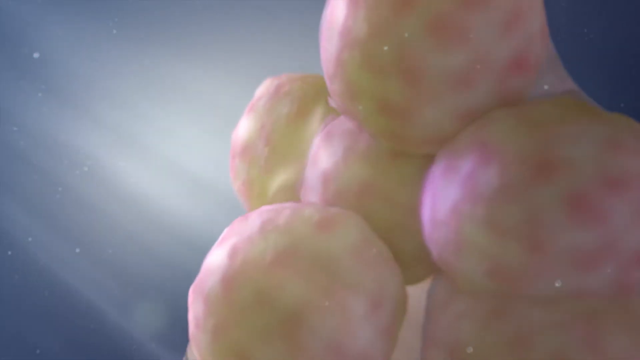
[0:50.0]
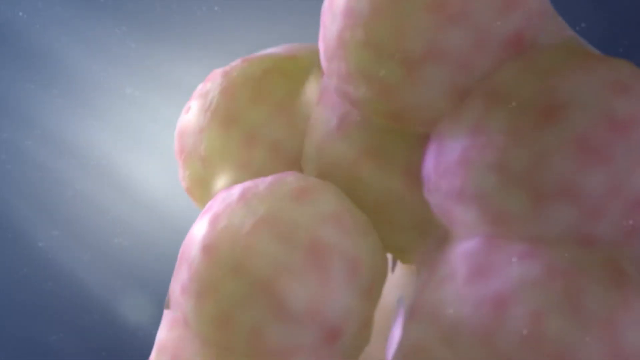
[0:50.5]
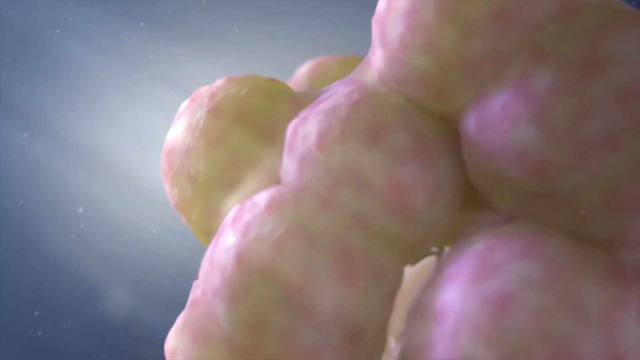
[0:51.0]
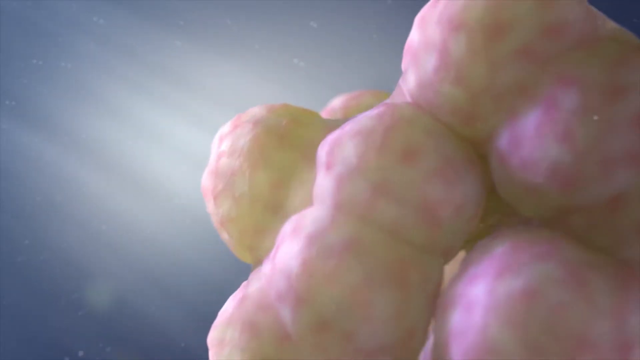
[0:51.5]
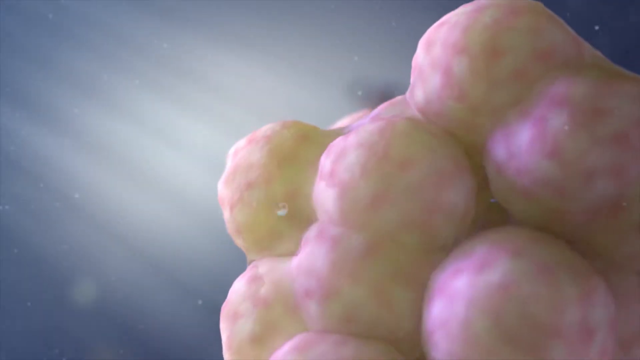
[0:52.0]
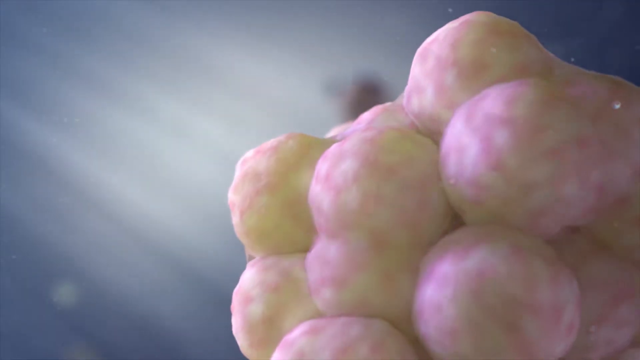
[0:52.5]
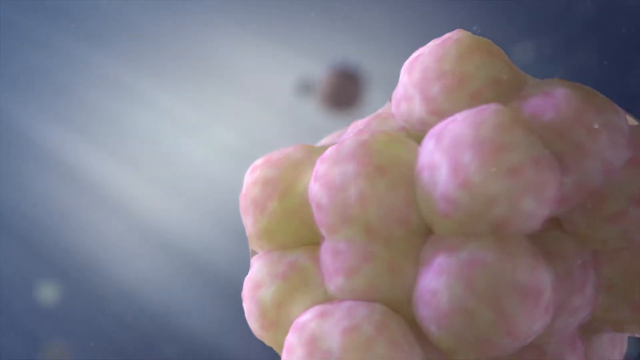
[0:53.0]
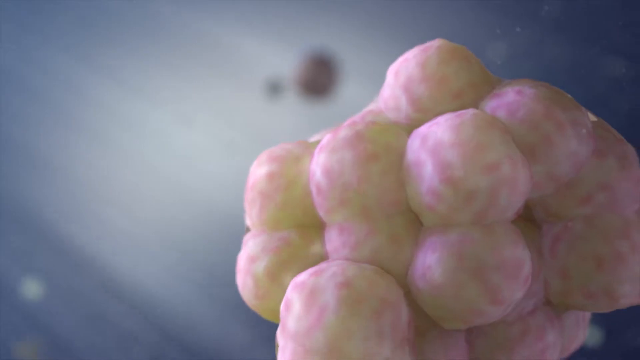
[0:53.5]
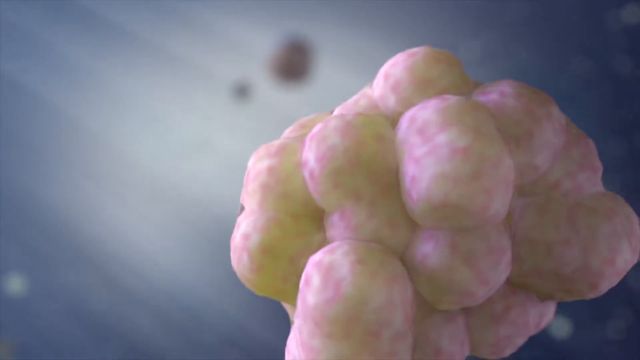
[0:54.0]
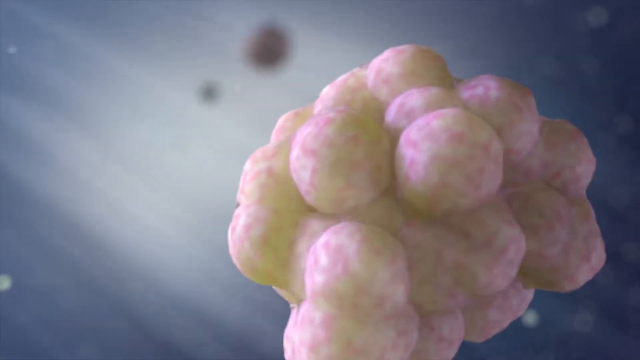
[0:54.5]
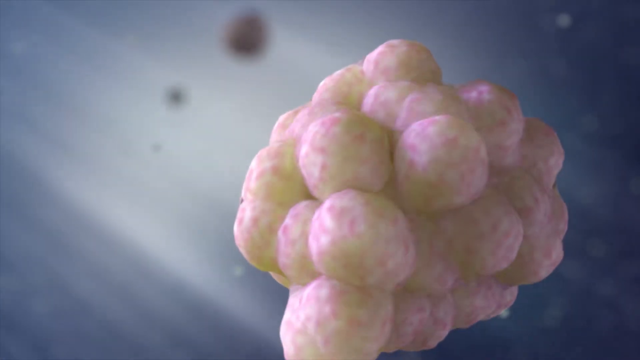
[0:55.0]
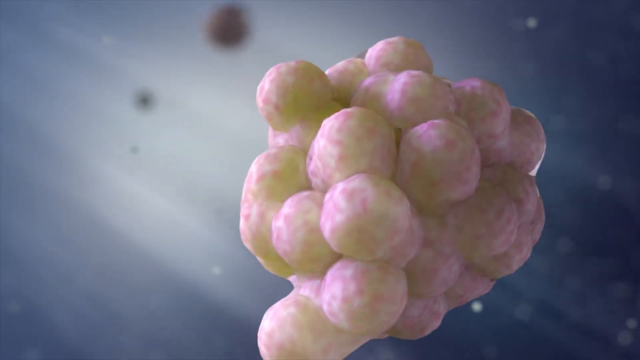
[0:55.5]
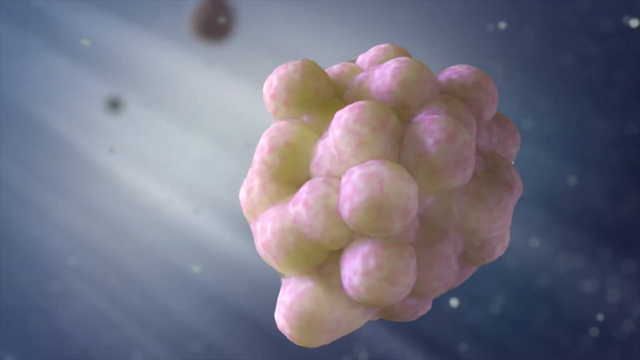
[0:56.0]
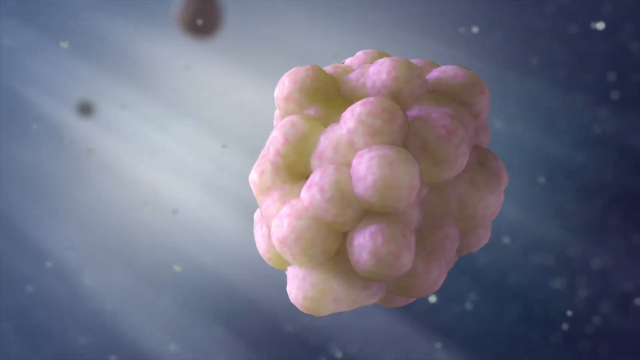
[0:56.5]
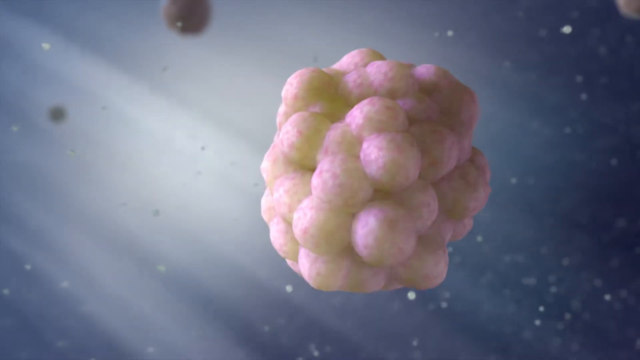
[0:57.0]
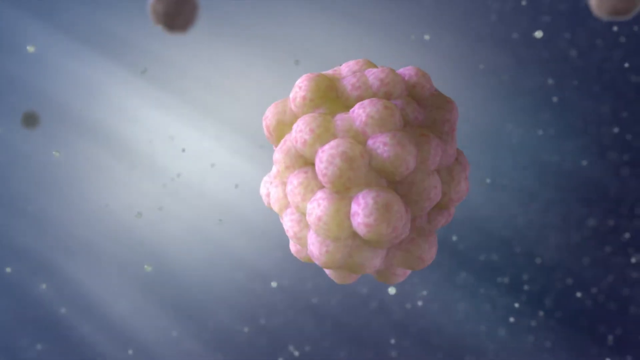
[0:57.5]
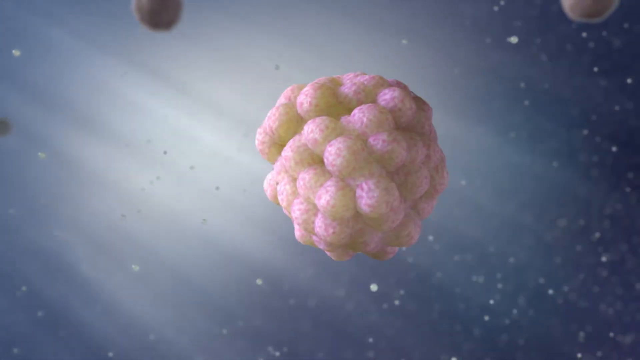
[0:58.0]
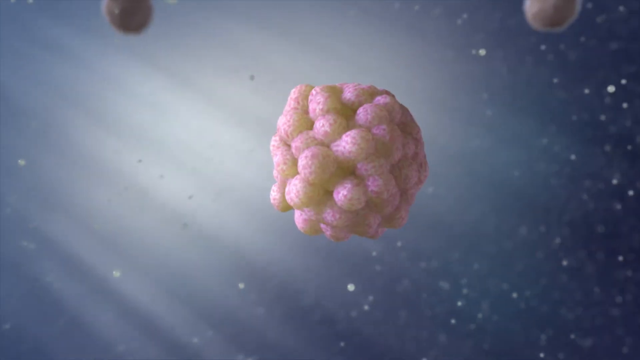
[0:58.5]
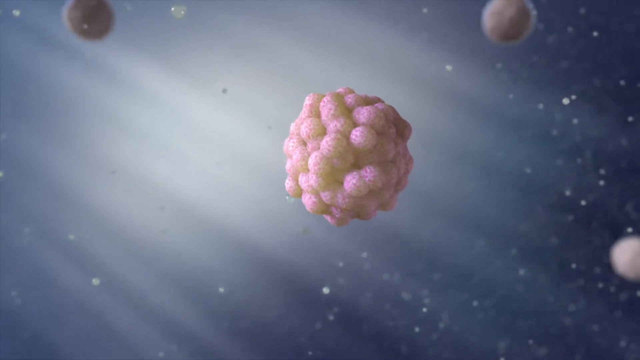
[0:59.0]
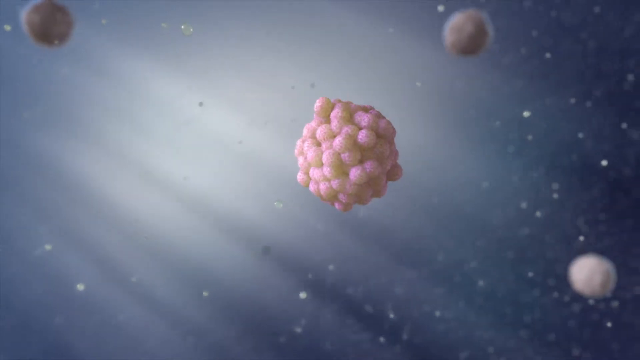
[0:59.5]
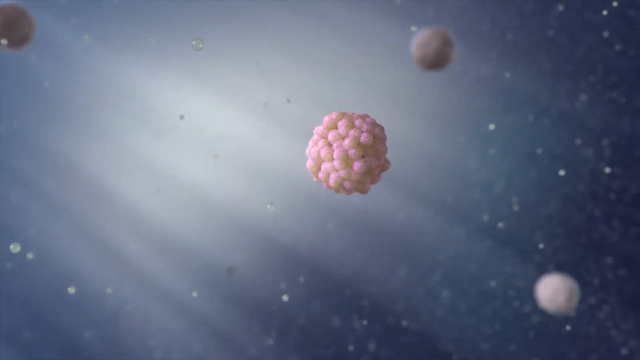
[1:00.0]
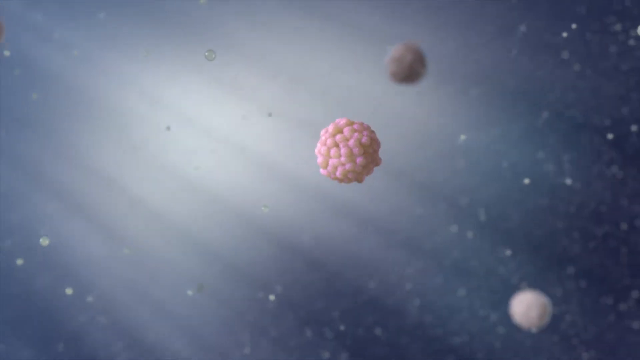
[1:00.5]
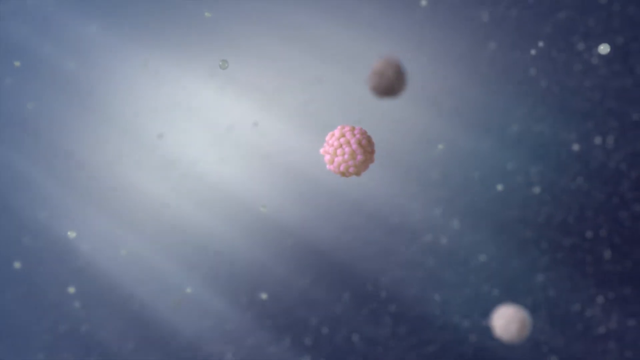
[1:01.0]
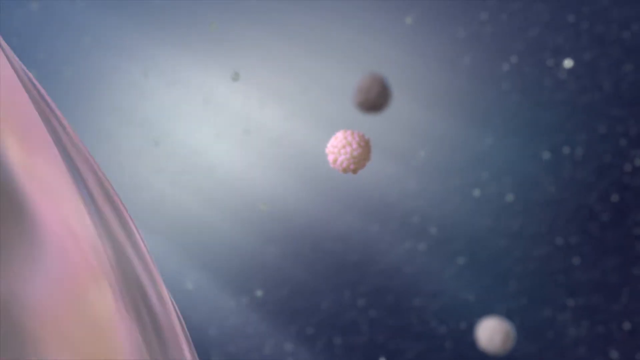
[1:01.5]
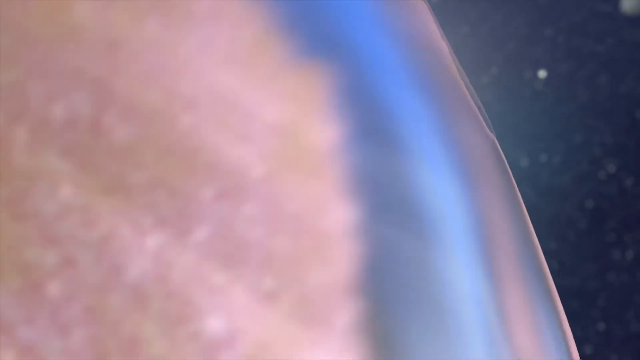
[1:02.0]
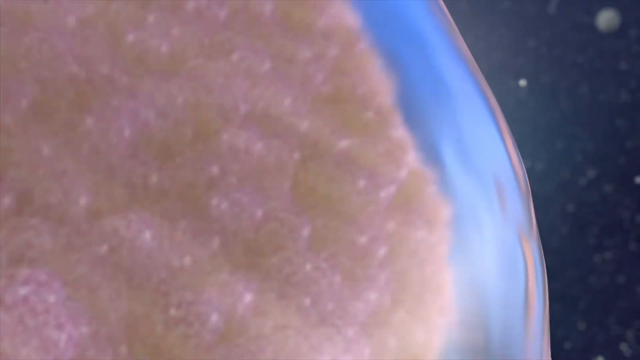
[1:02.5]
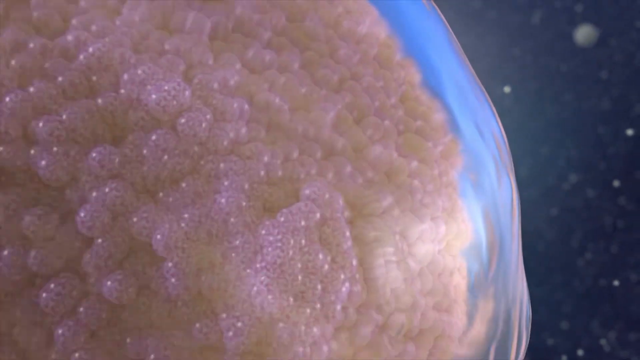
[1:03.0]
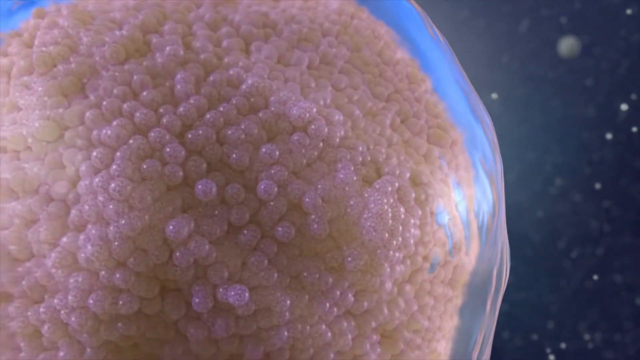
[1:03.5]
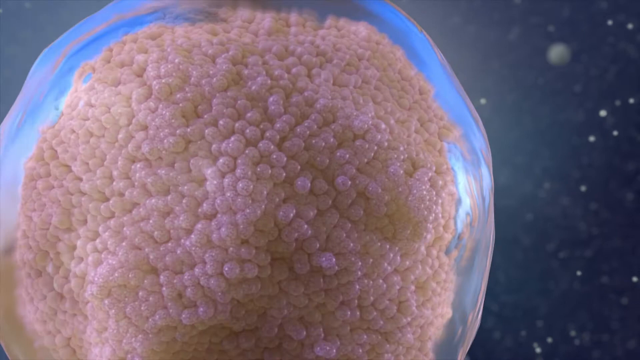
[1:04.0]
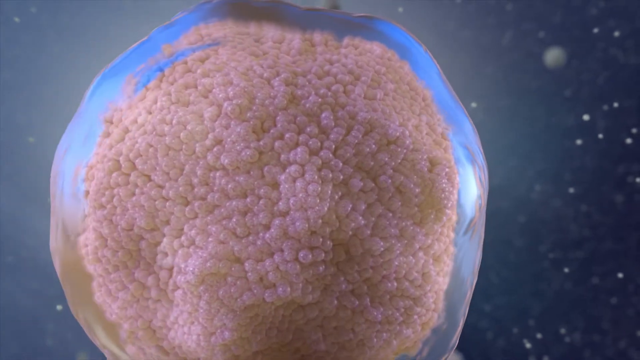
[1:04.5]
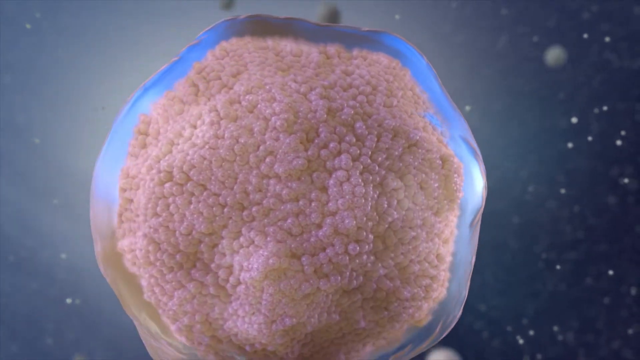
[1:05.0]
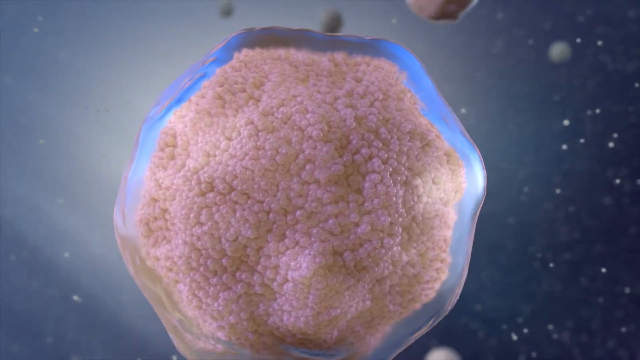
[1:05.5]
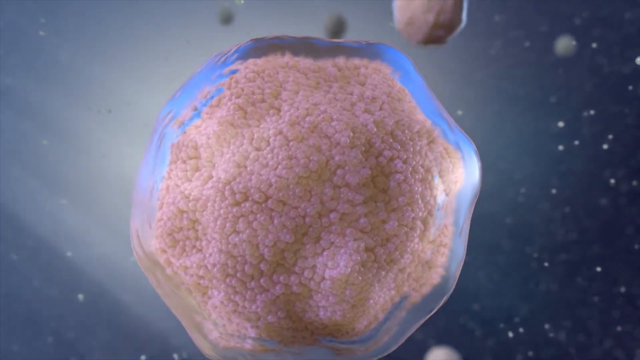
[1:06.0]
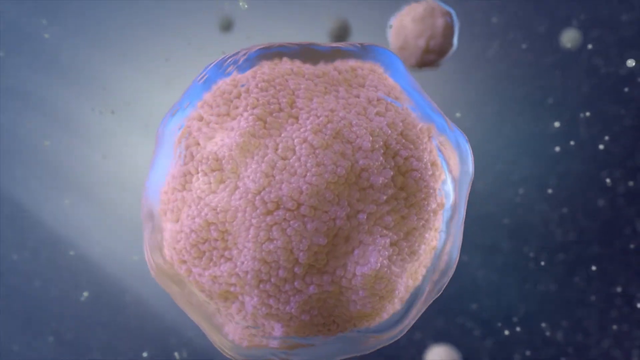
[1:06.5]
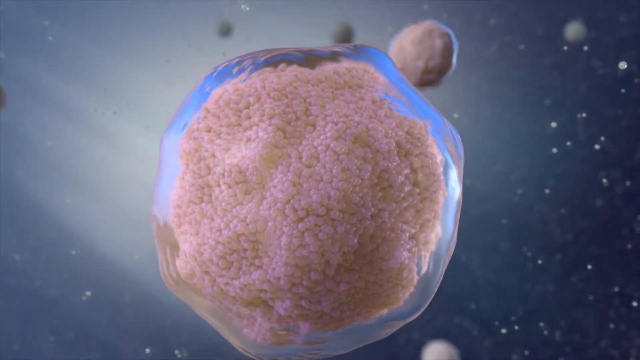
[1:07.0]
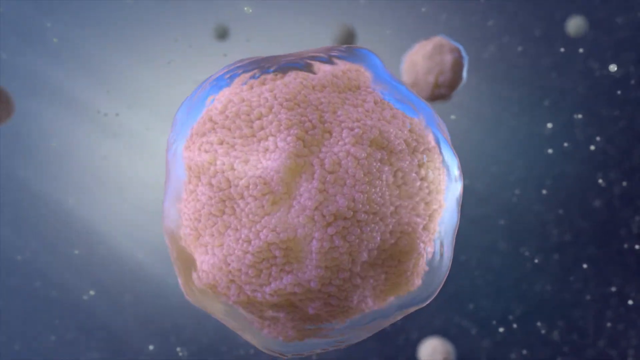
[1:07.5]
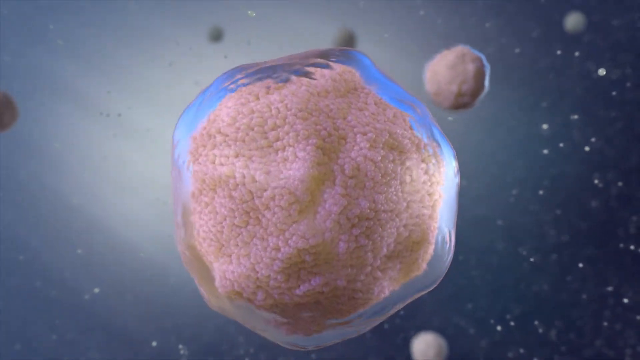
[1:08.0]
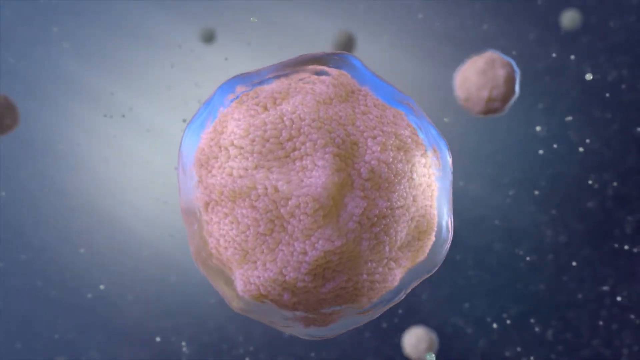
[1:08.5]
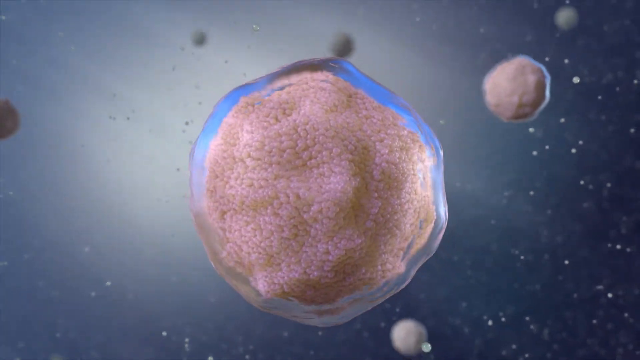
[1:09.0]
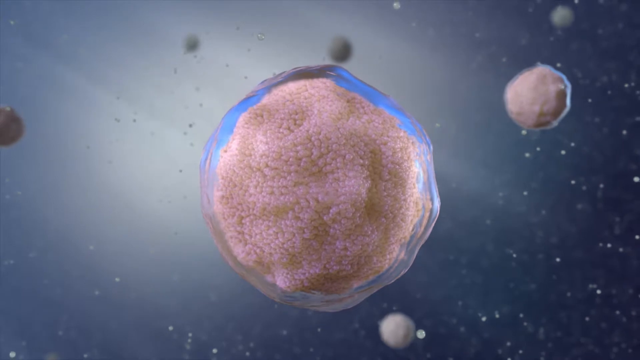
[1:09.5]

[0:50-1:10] An up-close view shows bacteria multiplying over and over, looking like some kind of mutated pink blob floating in outer space, with some sunlight shining down on it from the left corner. It keeps multiplying and growing bigger, and then the camera zooms out to show thousands of these, all multiplying at the same time and looking like planets flying around in a universe. The camera then focuses on one blob, which has almost a blue outline, as if some kind of water is holding it in place. Its inside looks like trillions of tiny pink beads, and its outside looks like some kind of blue matter, almost as if it is suspended in jello. Outside it, lots of other bacteria of the same kind float and fly around. The video stays focused on this blob for a while.